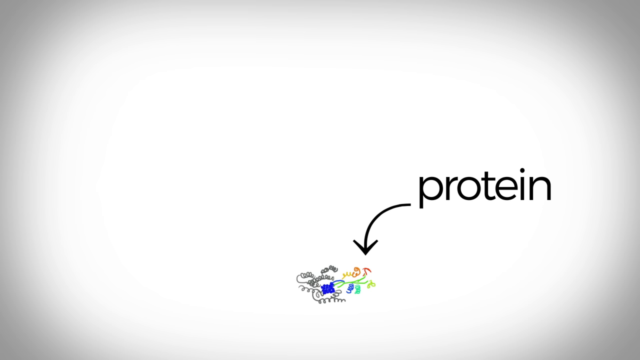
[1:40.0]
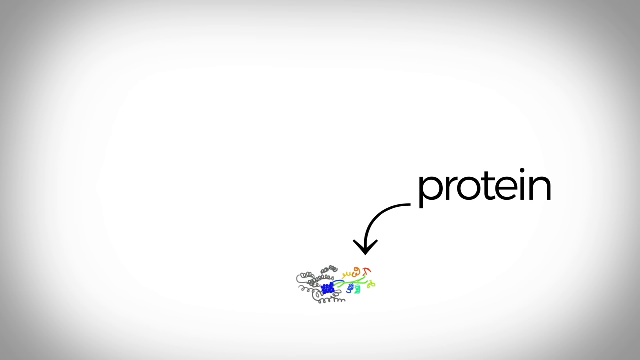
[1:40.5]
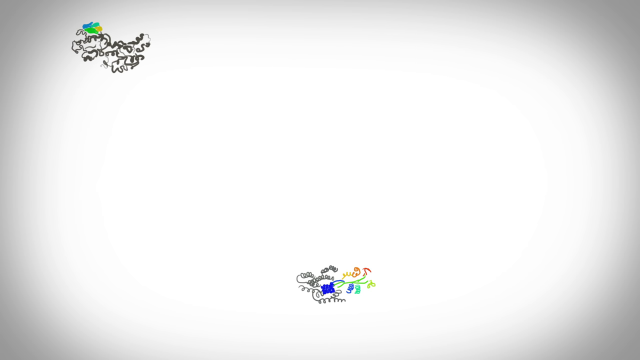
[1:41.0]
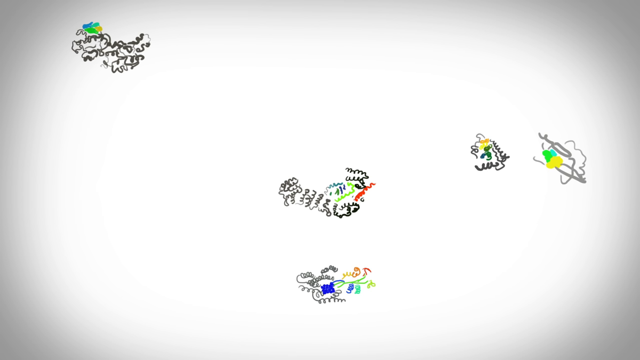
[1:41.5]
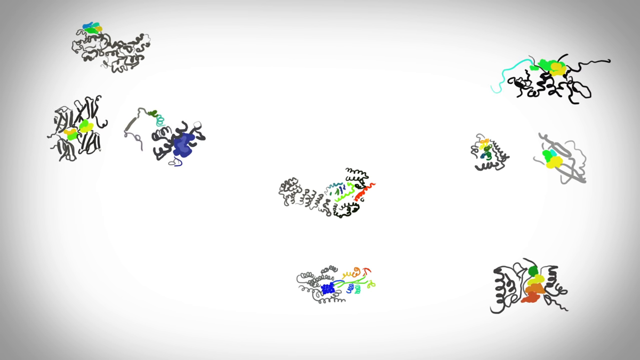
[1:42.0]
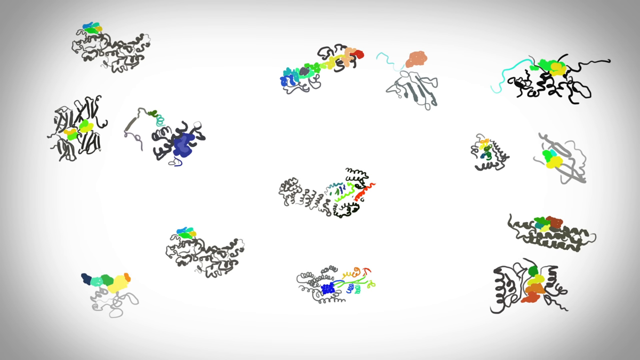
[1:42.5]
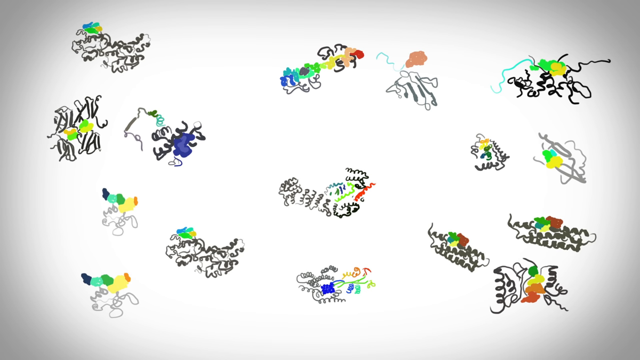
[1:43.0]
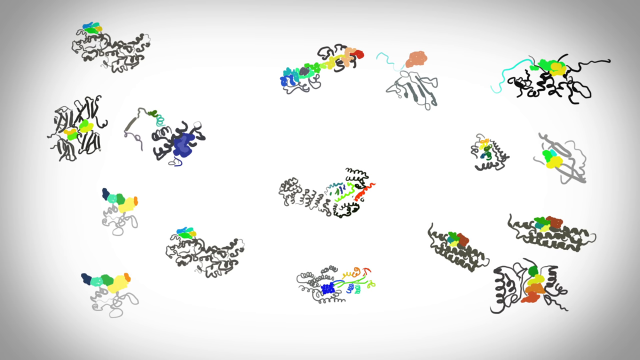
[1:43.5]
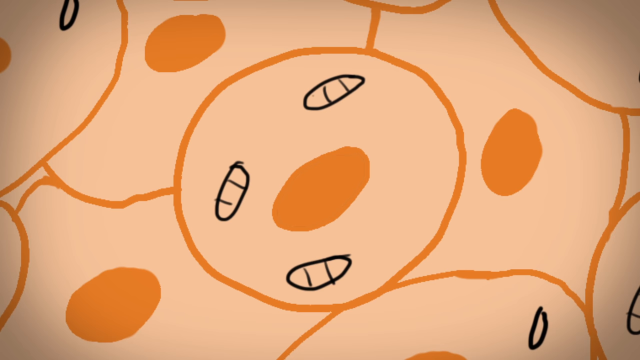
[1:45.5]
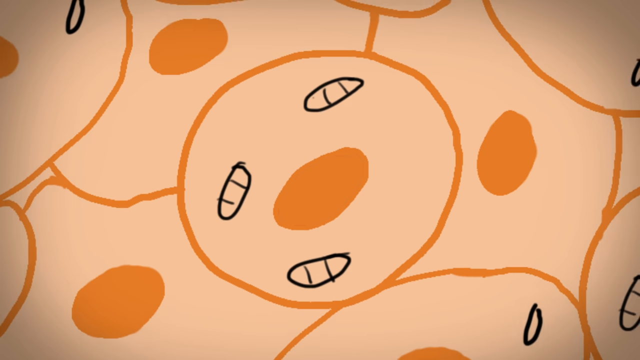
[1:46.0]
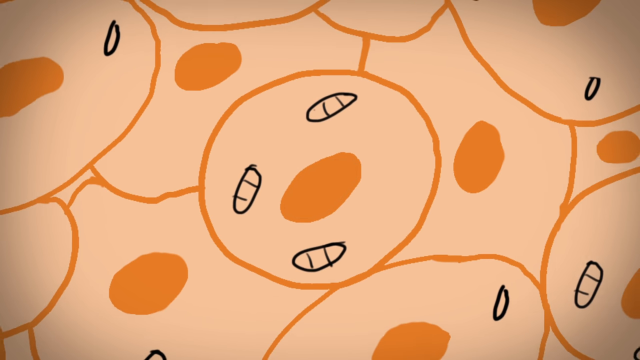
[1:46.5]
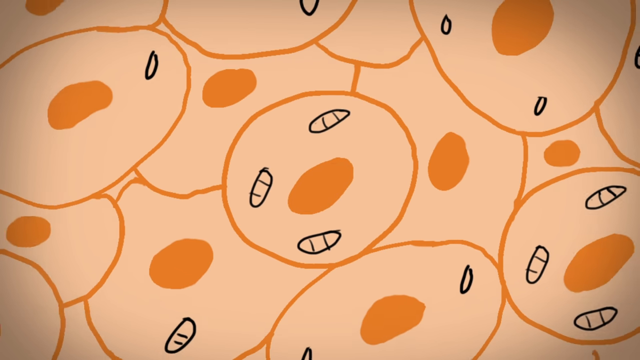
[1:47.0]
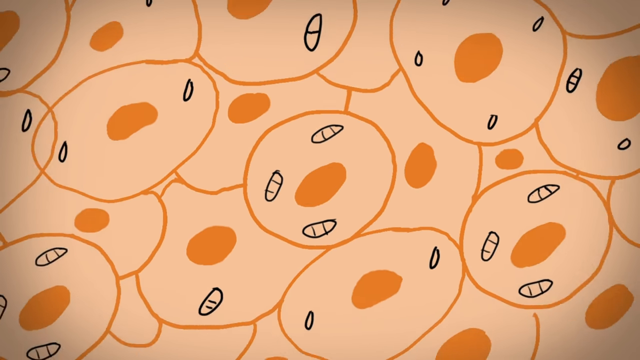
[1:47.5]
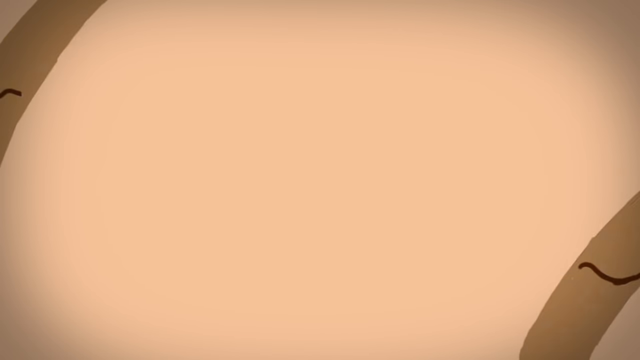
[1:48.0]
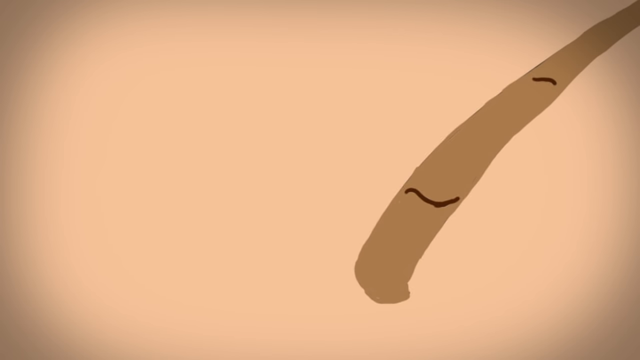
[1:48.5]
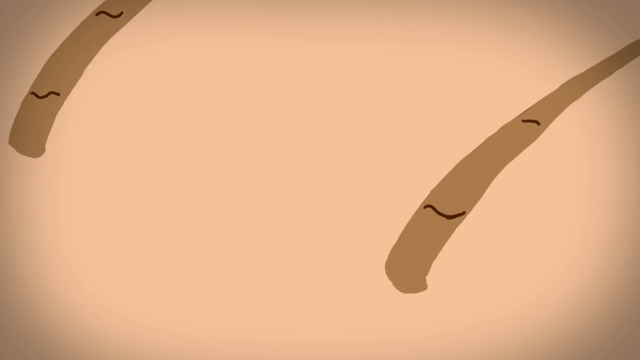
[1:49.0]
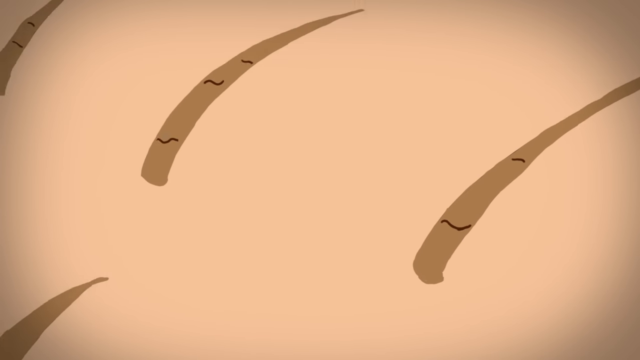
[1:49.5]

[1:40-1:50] On a white background, the word "protein" is in black letters on the right side of the screen. An arrow goes from a piece of protein down to a bunch of squiggly lines, some of which sort of look like little springs; some are gray, some blue, some green and some orange. Many similar-looking shapes then appear all over the screen. Next come things that look like little round cells. All of this is drawn. The view then zooms out to show some hair on a drawing of a person's body, with nipples visible on the body.